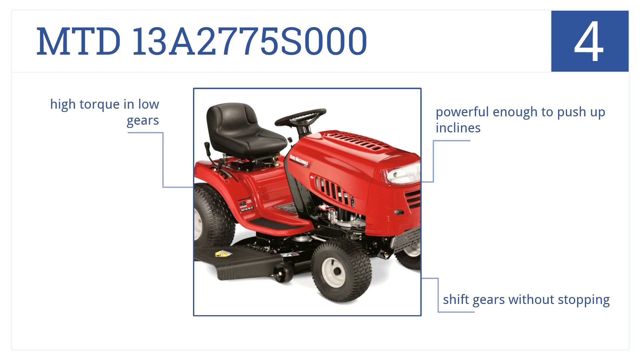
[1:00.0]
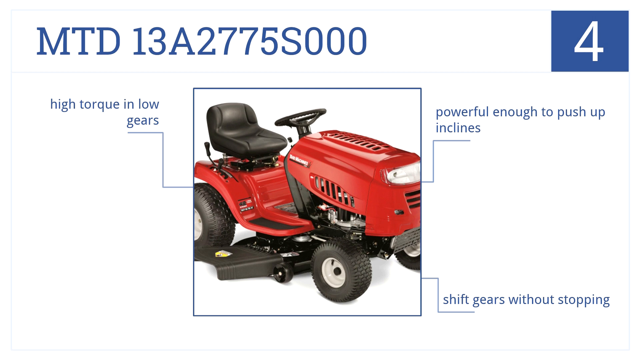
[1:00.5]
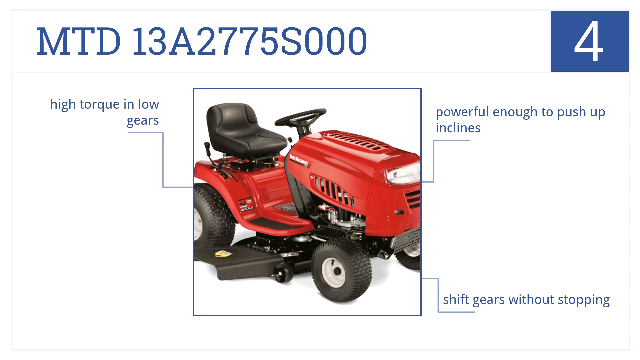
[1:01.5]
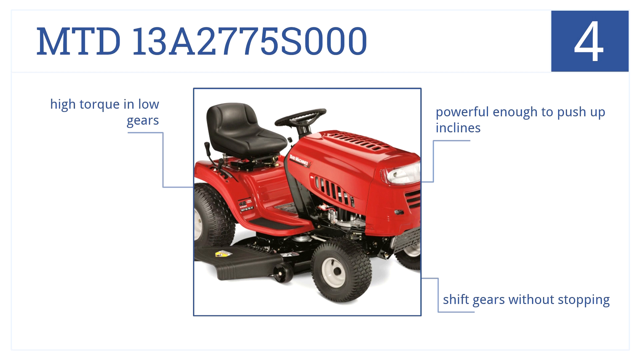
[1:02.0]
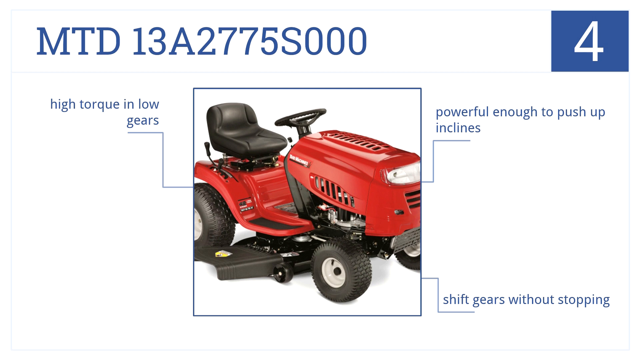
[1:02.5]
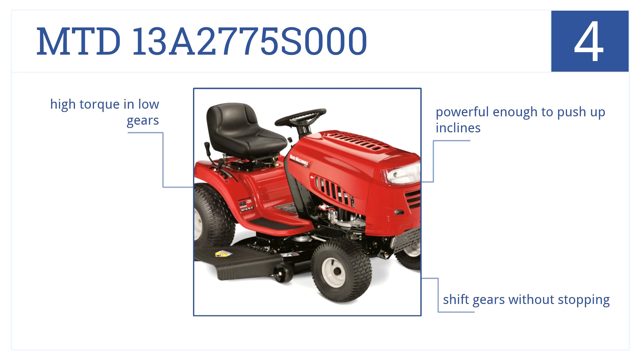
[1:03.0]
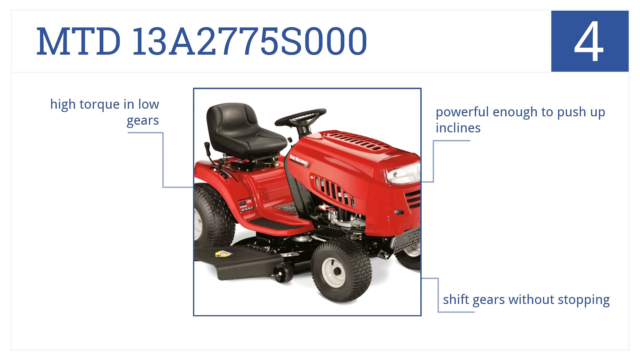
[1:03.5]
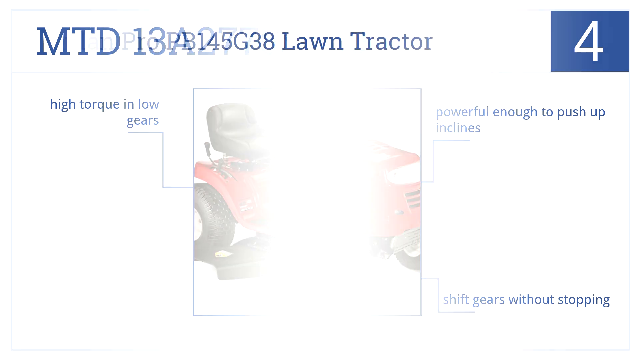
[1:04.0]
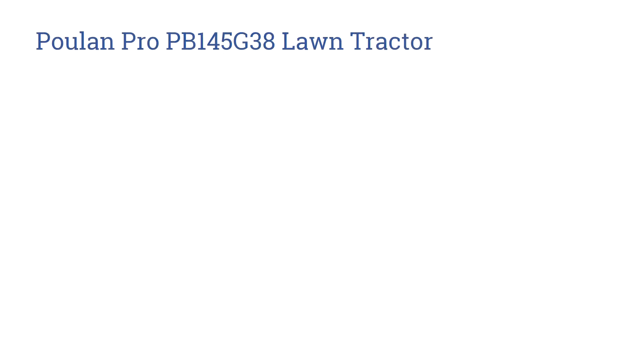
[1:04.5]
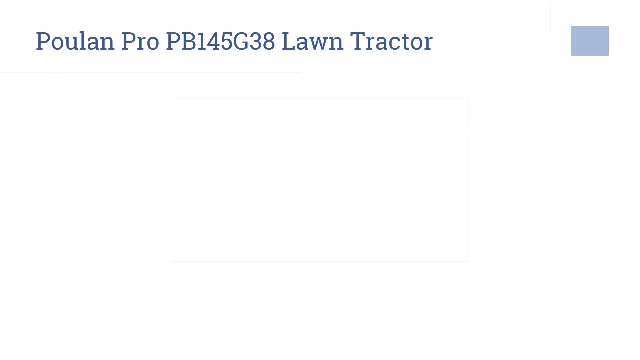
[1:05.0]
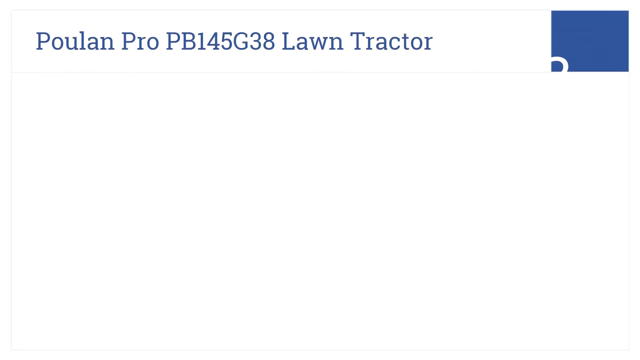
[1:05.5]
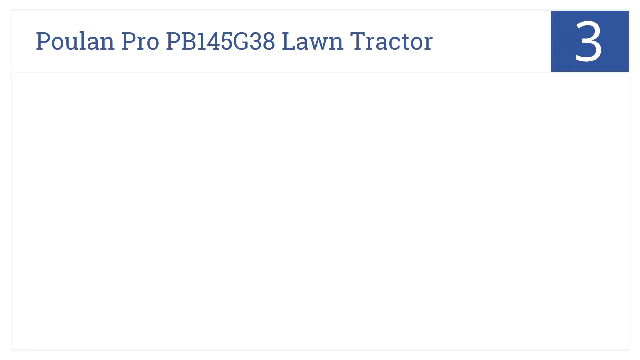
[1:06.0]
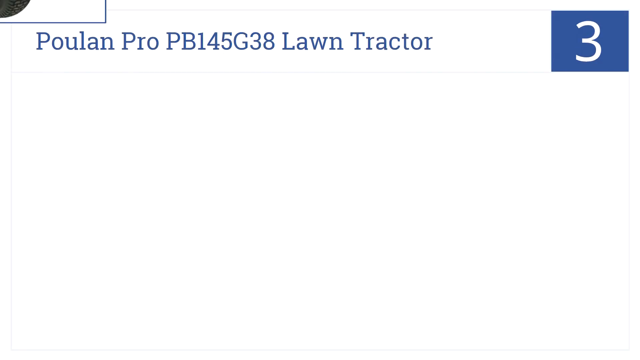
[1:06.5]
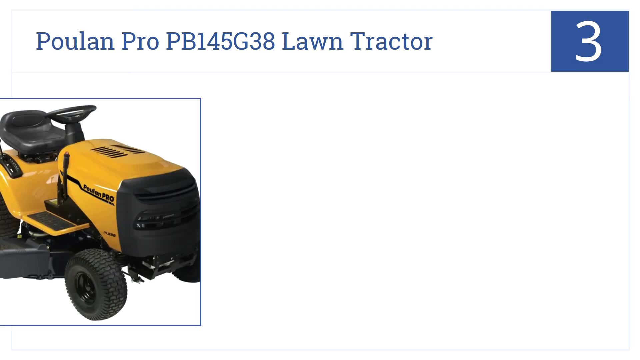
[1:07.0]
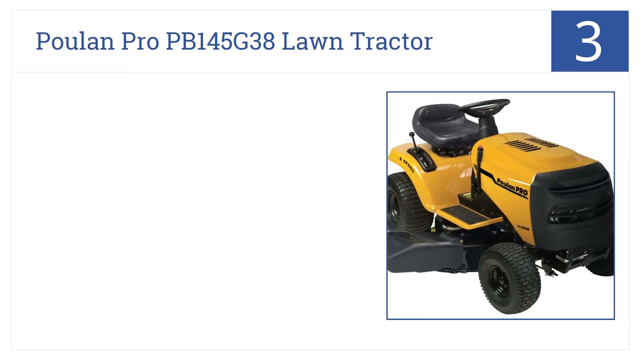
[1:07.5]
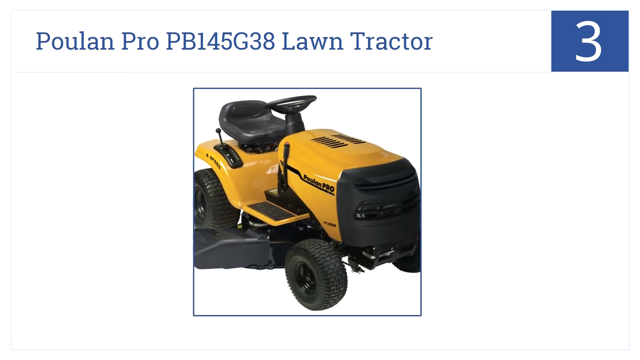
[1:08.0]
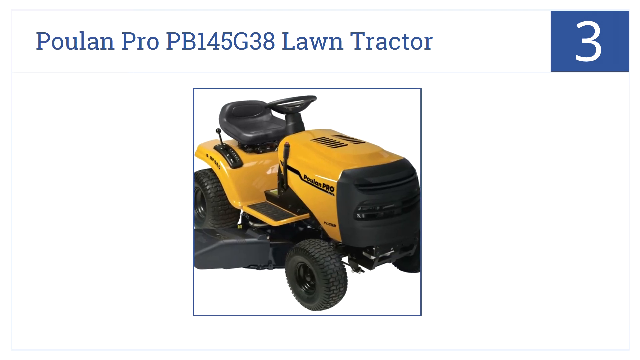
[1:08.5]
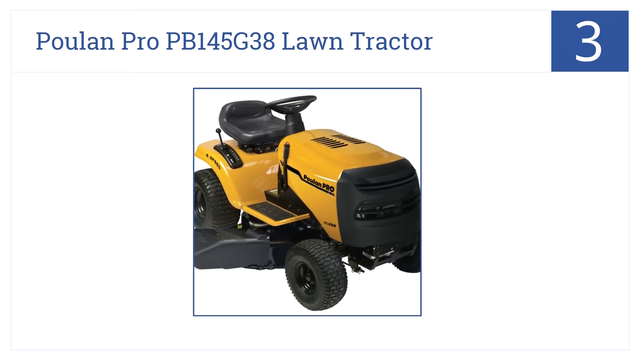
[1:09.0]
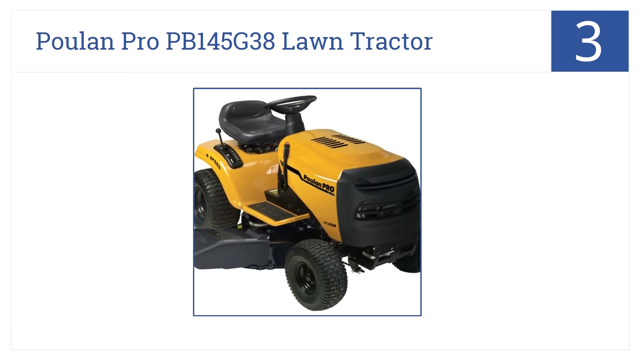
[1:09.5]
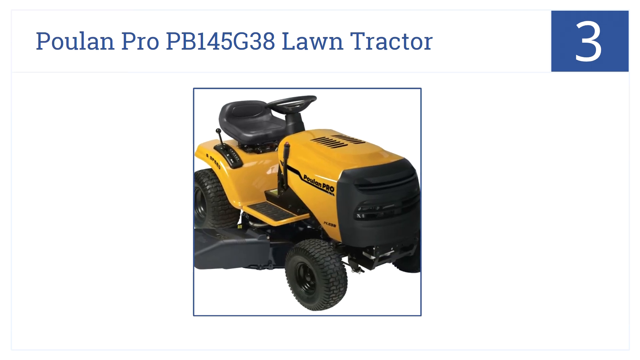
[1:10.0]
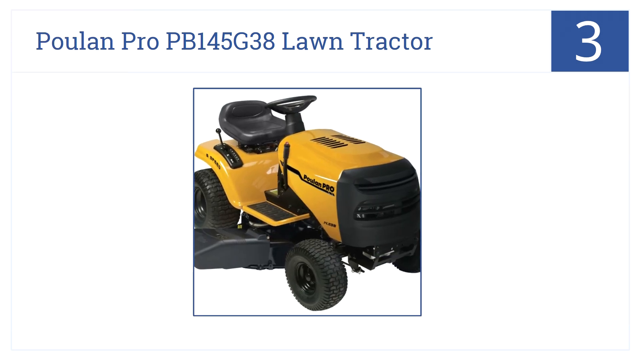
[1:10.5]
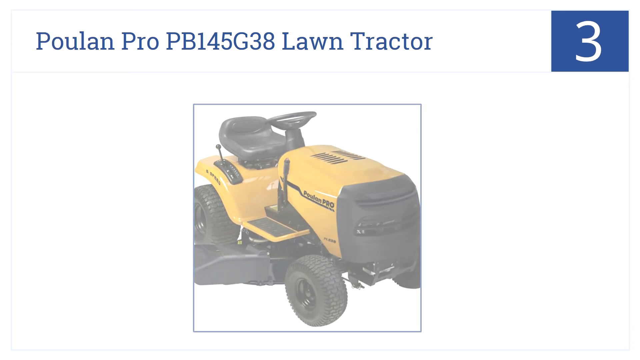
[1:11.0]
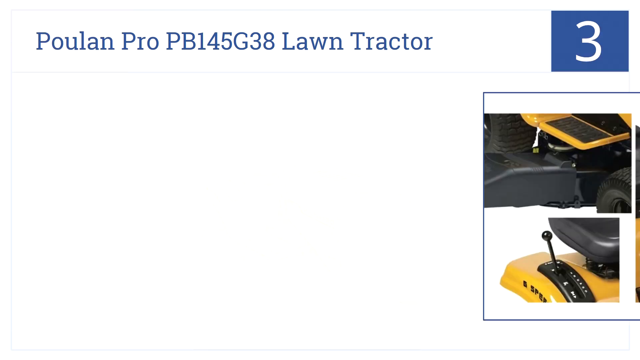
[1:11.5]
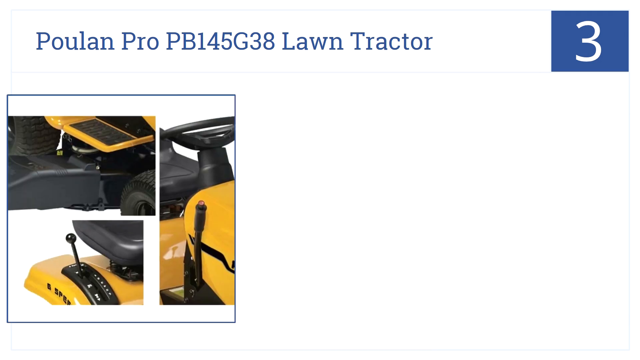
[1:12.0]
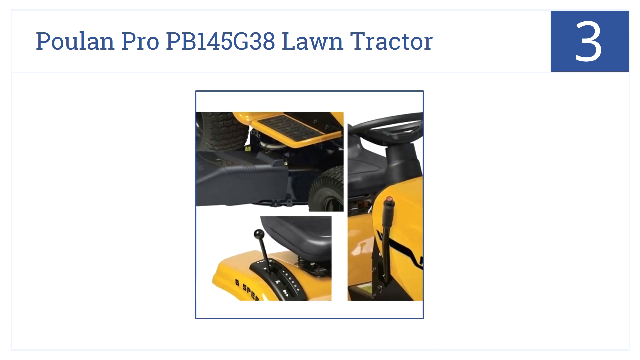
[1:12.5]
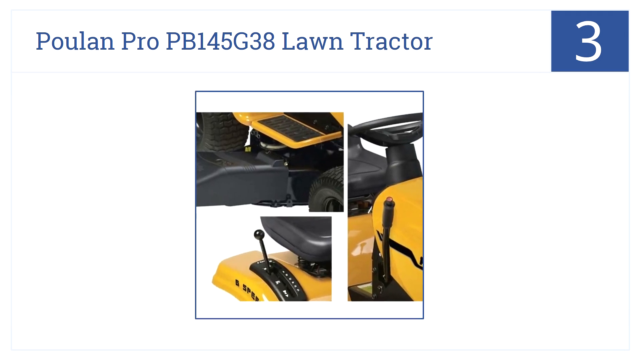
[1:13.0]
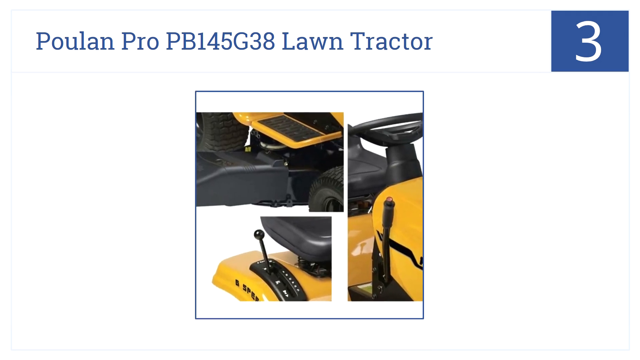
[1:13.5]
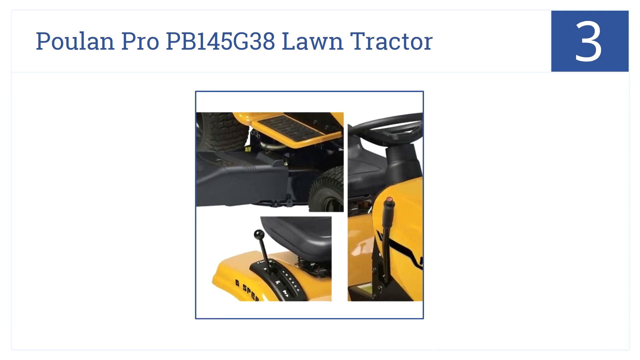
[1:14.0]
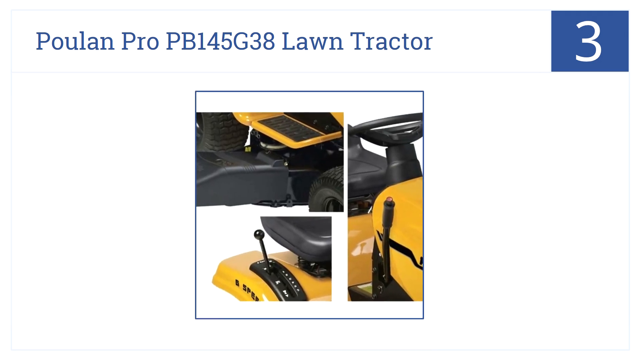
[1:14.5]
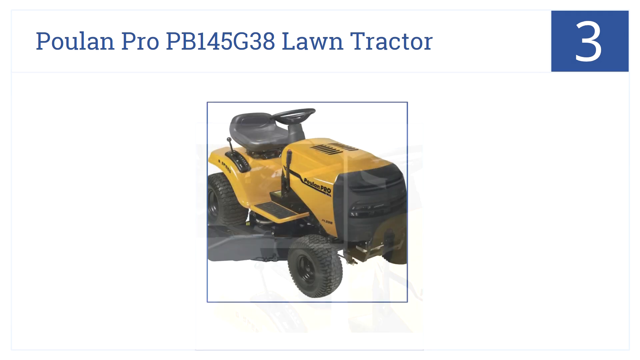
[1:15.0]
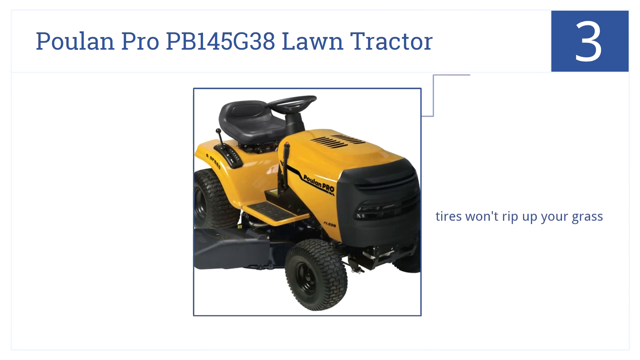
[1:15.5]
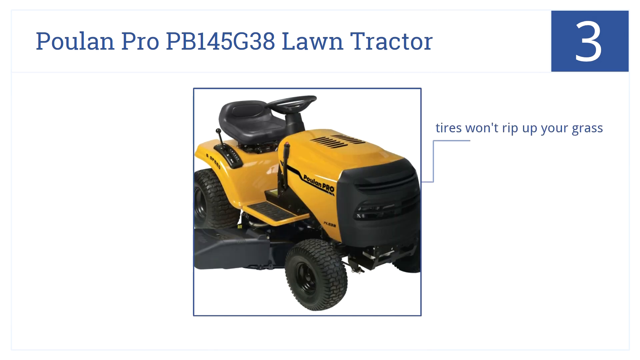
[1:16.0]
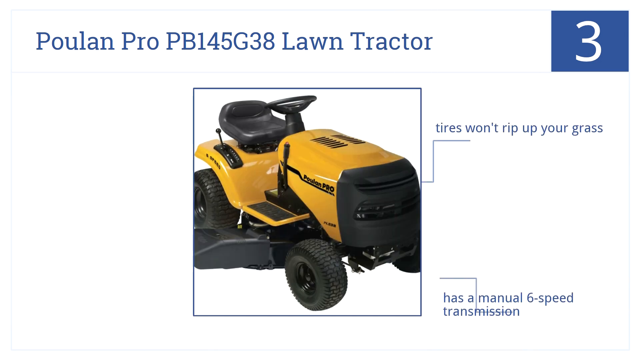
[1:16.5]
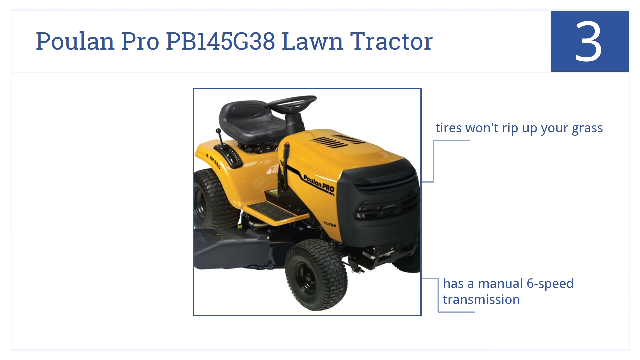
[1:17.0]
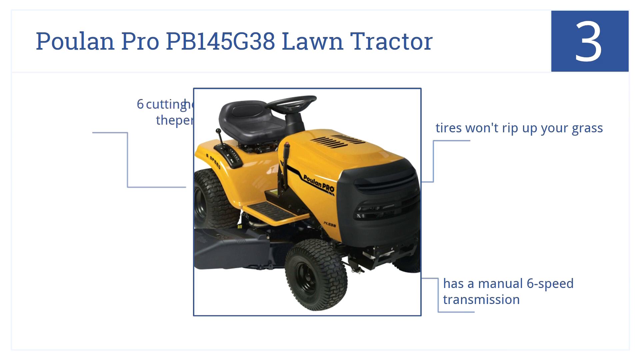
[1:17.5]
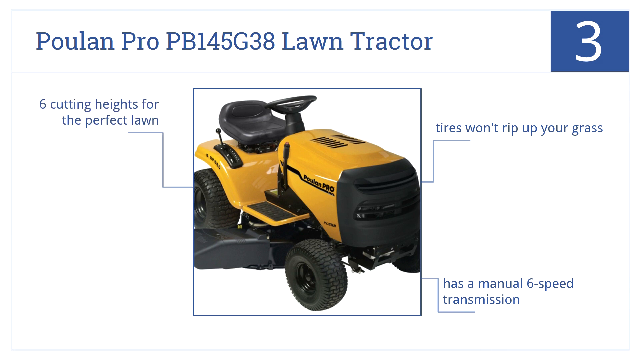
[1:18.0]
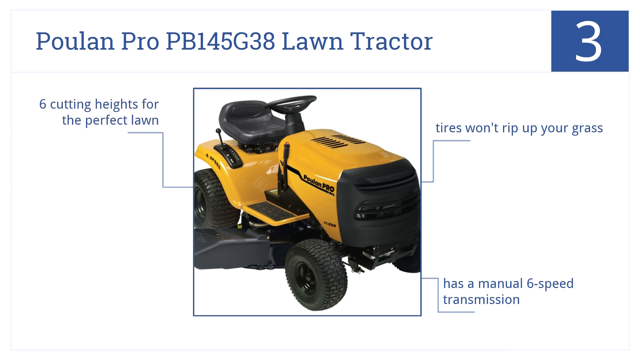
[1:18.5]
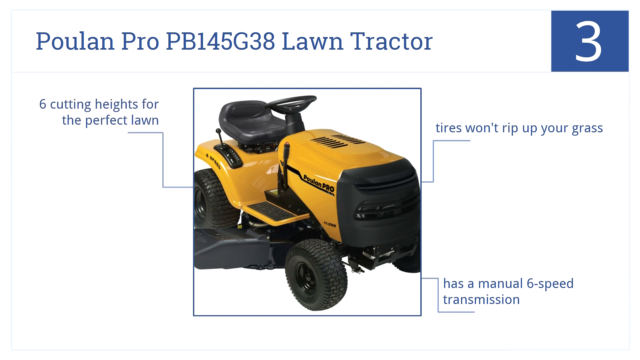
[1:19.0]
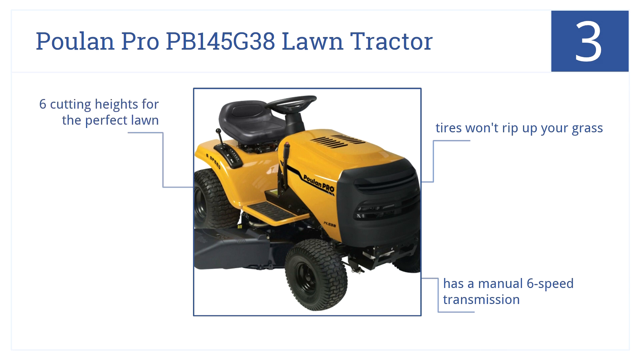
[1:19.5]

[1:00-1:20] The red tractor remains with the blue information text around it, the 4 logo on the top right in white on a blue background, and the blue text on the top left reading "MTD" followed by numbers and letters. Everything quickly fades away, and new blue text appears reading "Pulon Pro" followed by text and more numbers and then the words "Lawn Tractor." On the top right, a new logo shows the number 3 in white, and a new image of a yellow and black tractor drops down. That image fades away and a new one appears showing multiple views of the tractor and its controls. This fades to another image of the tractor, and blue text appears reading "six trimming heights for the perfect lawn," "tires won't rip up your grass," and "has a manual six-speed transmission," with arrows connecting to the image.